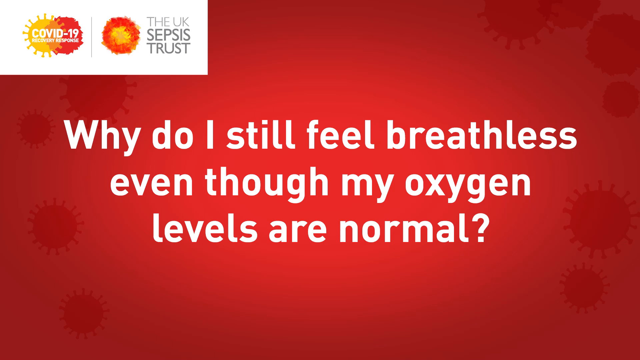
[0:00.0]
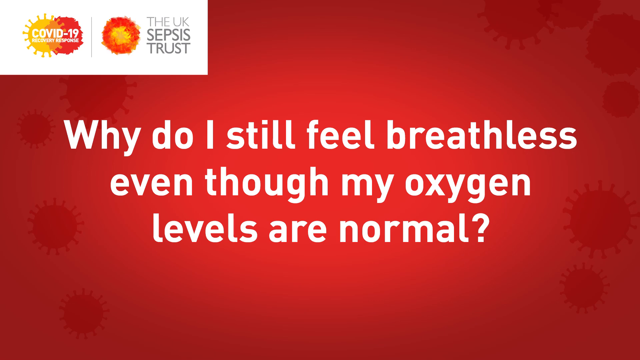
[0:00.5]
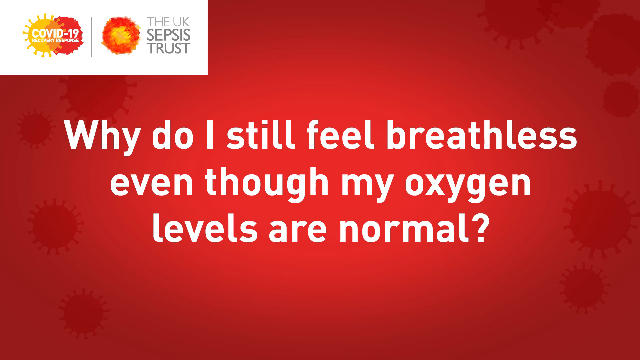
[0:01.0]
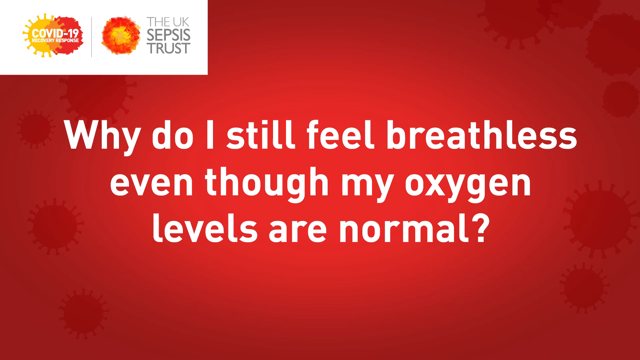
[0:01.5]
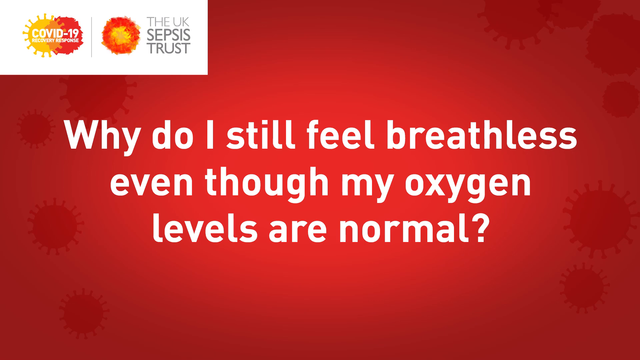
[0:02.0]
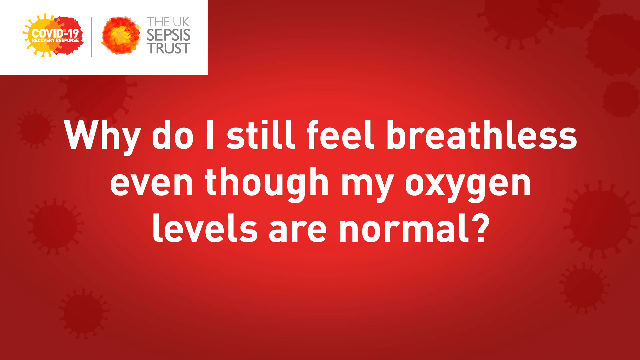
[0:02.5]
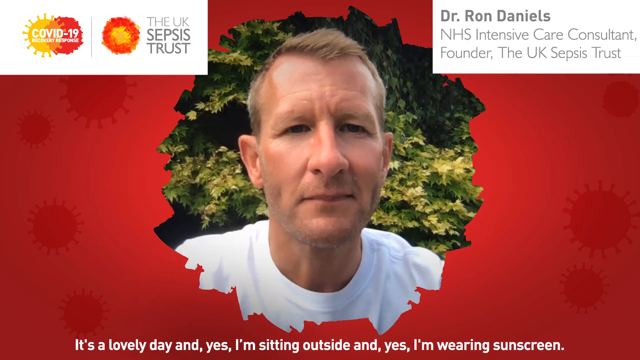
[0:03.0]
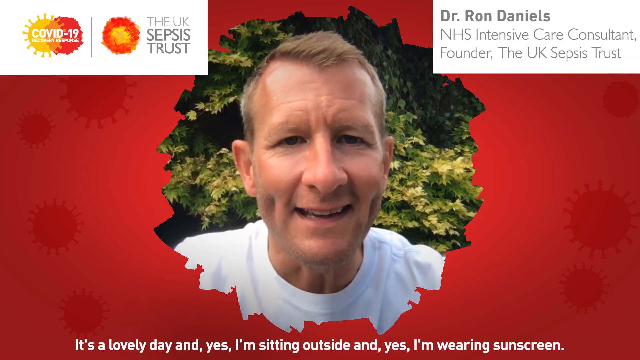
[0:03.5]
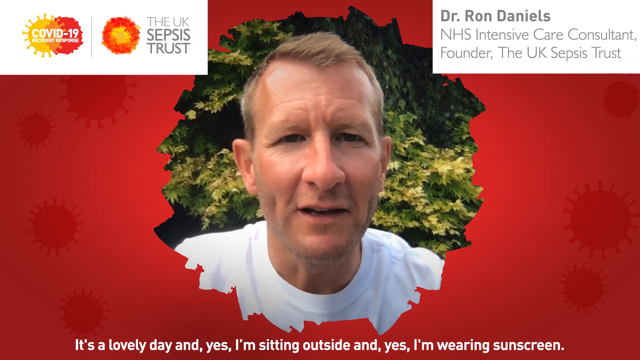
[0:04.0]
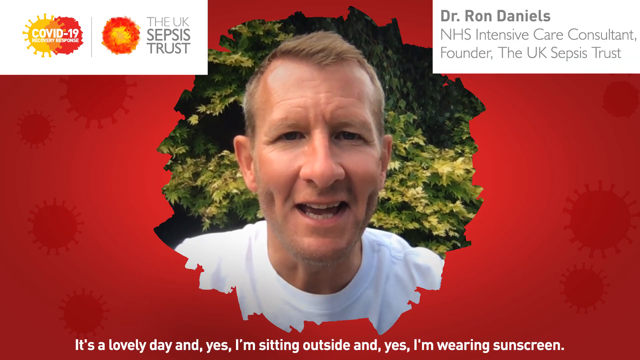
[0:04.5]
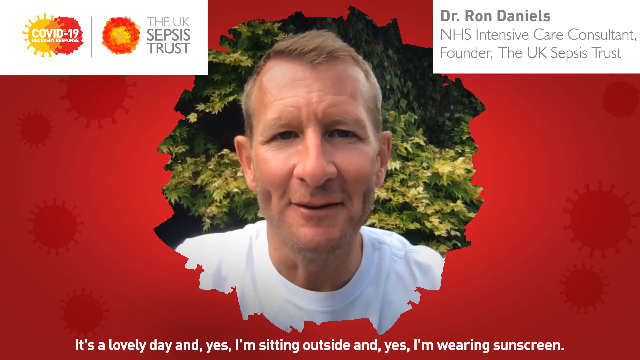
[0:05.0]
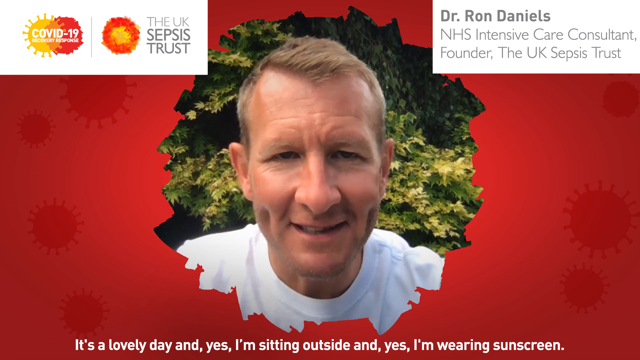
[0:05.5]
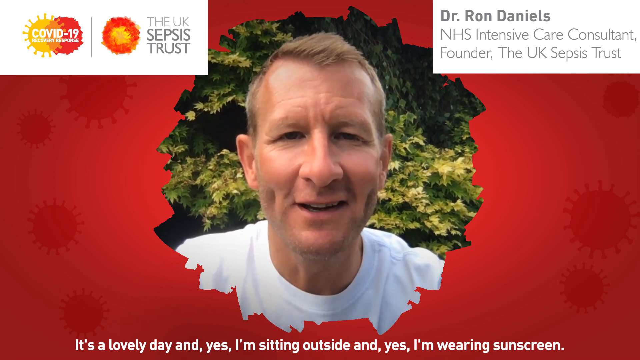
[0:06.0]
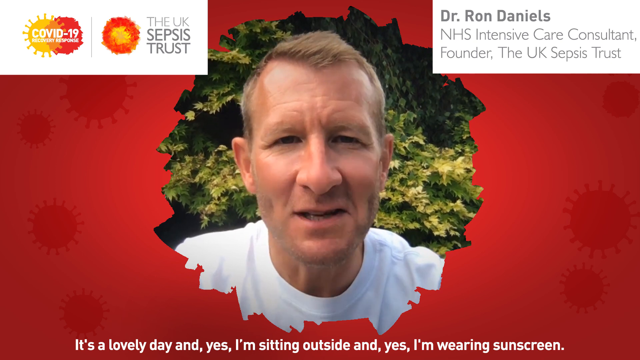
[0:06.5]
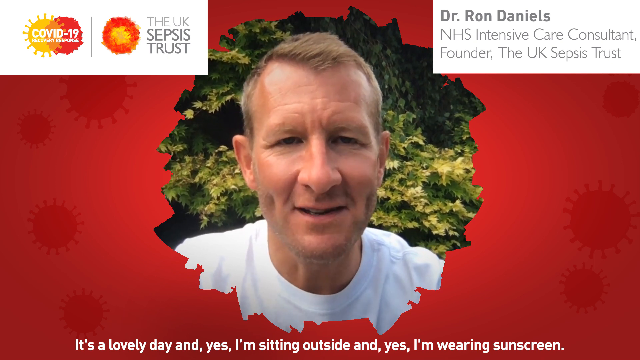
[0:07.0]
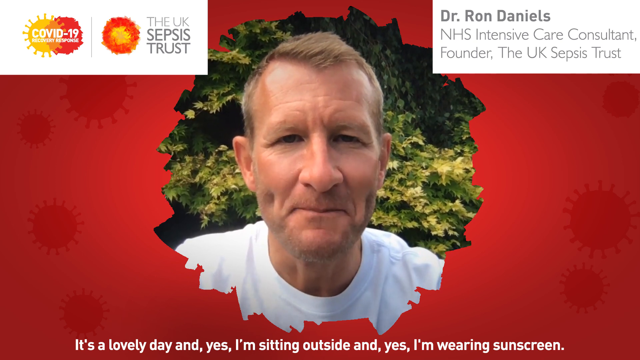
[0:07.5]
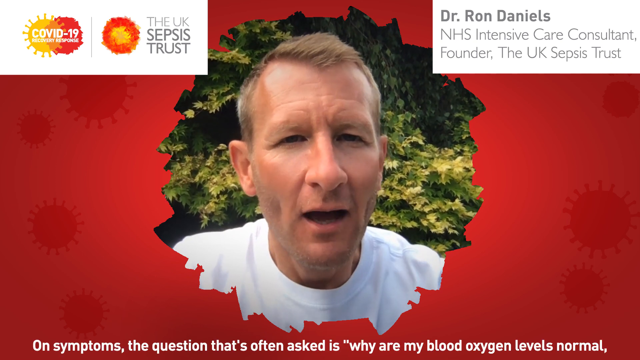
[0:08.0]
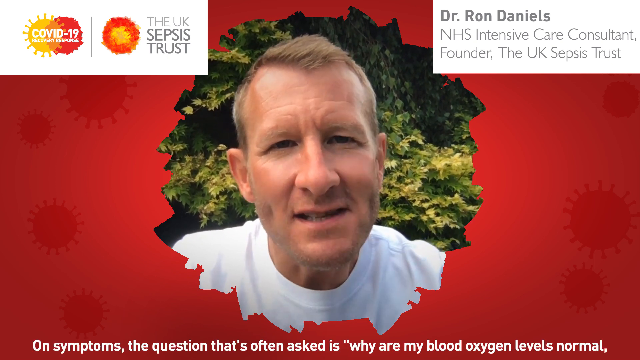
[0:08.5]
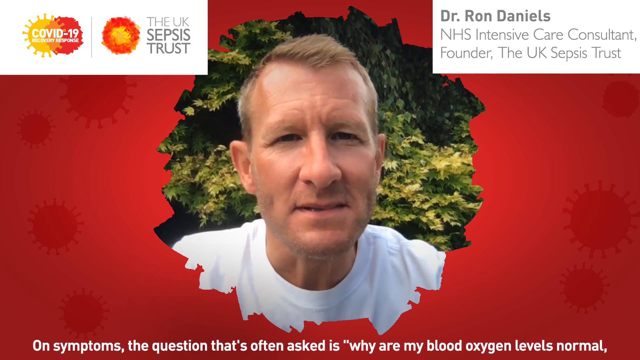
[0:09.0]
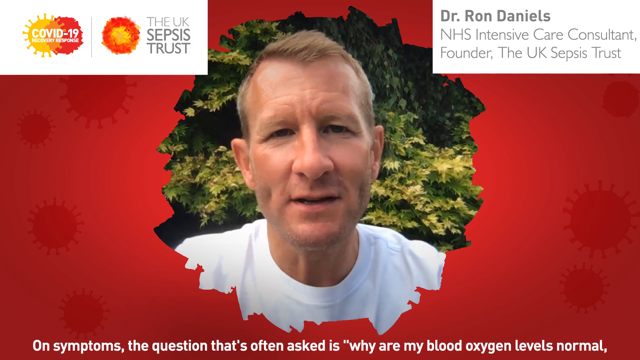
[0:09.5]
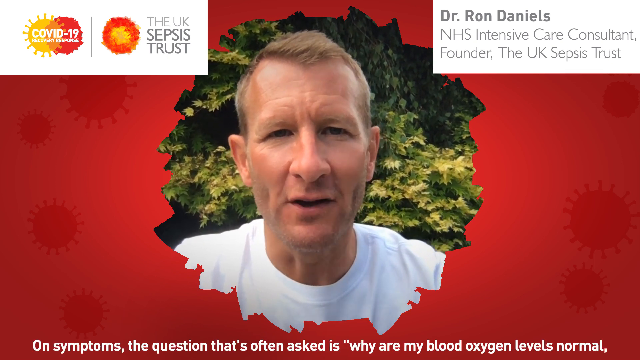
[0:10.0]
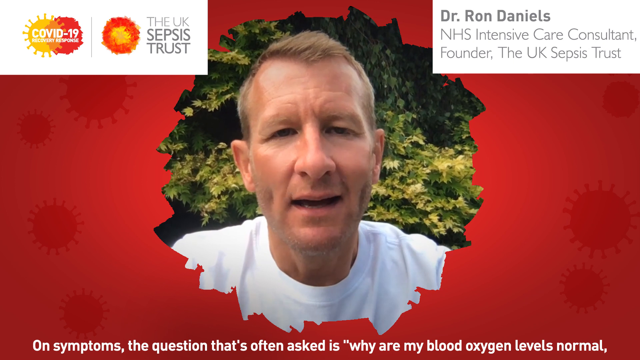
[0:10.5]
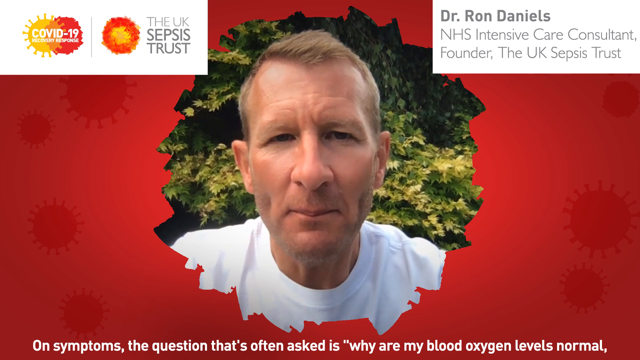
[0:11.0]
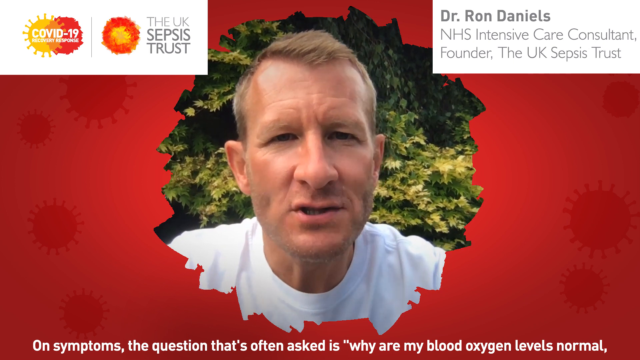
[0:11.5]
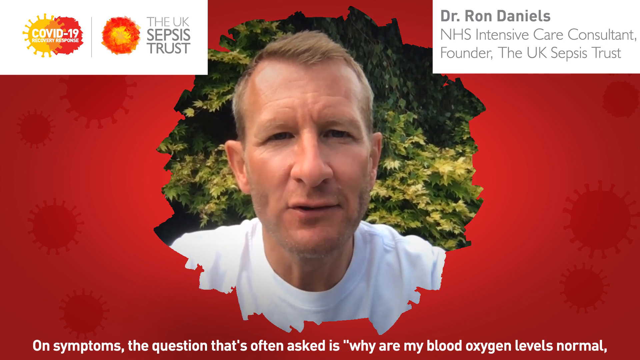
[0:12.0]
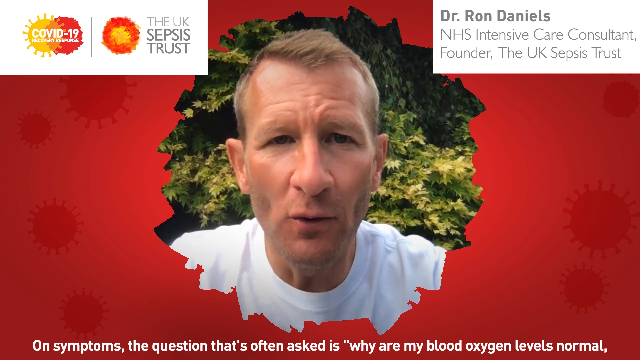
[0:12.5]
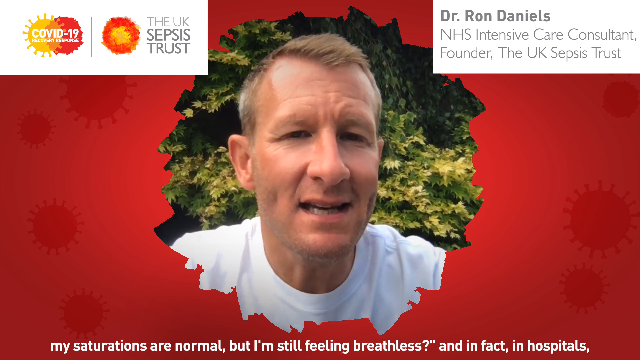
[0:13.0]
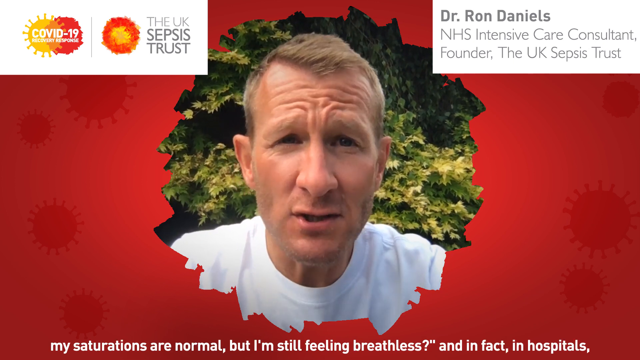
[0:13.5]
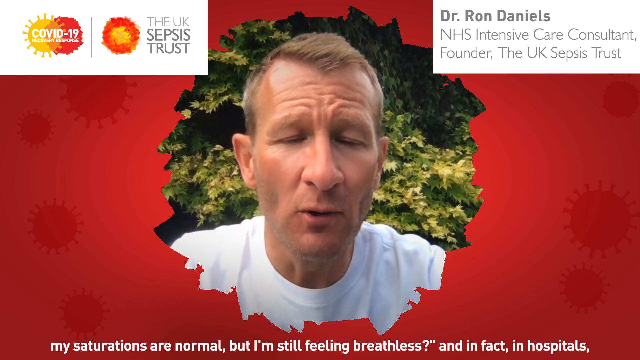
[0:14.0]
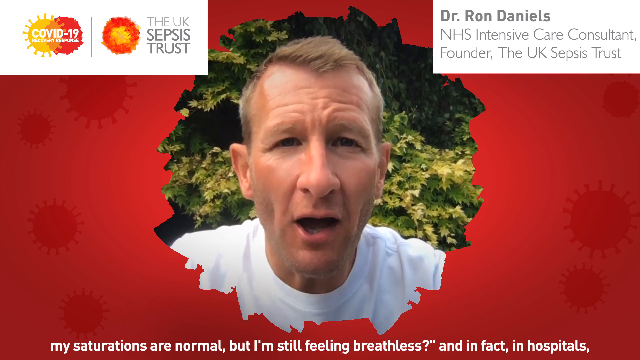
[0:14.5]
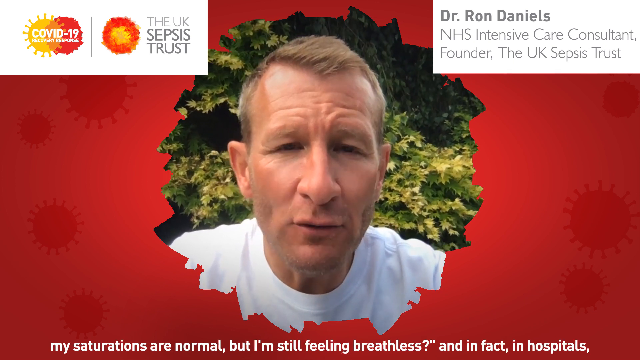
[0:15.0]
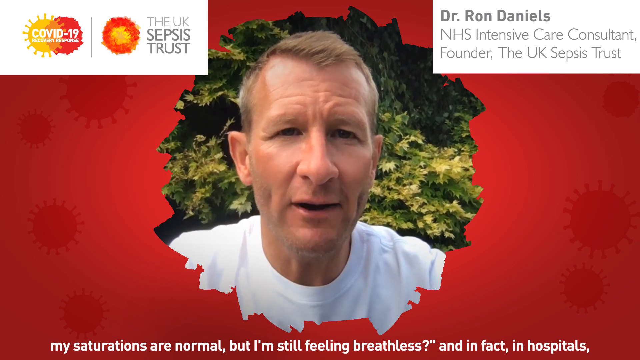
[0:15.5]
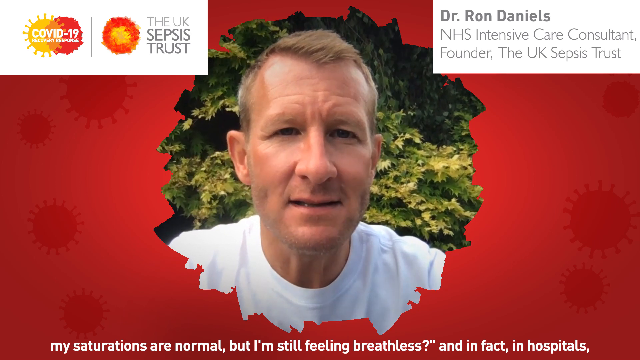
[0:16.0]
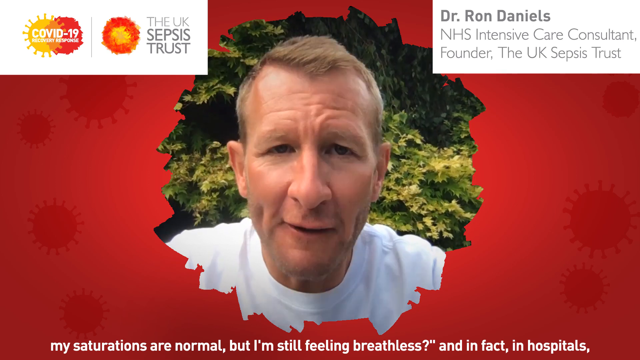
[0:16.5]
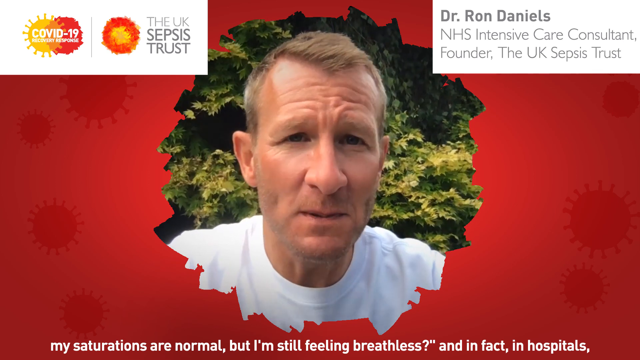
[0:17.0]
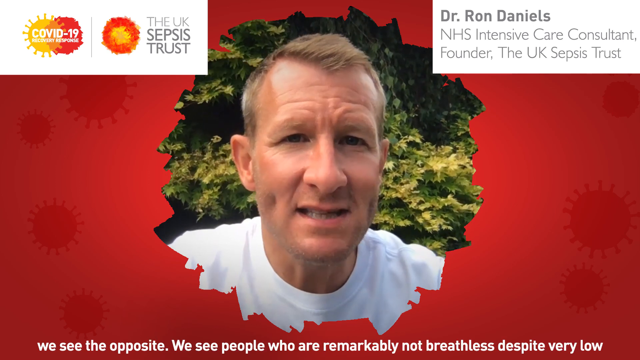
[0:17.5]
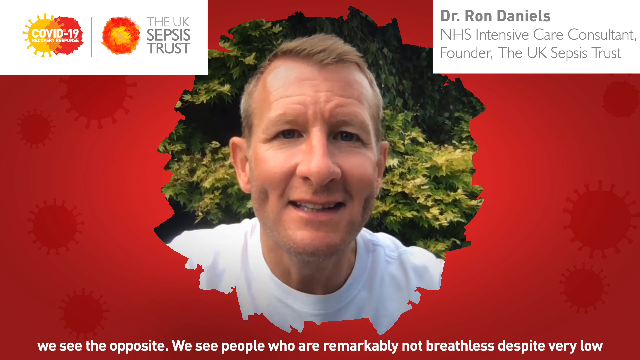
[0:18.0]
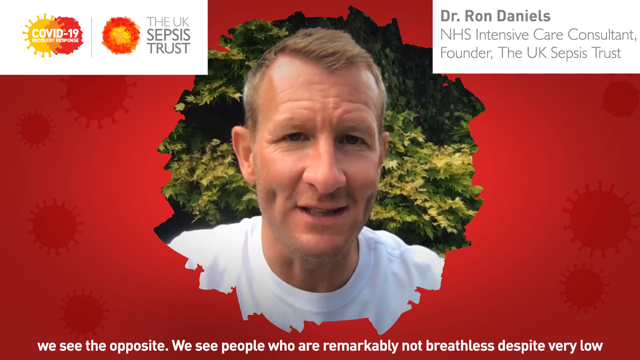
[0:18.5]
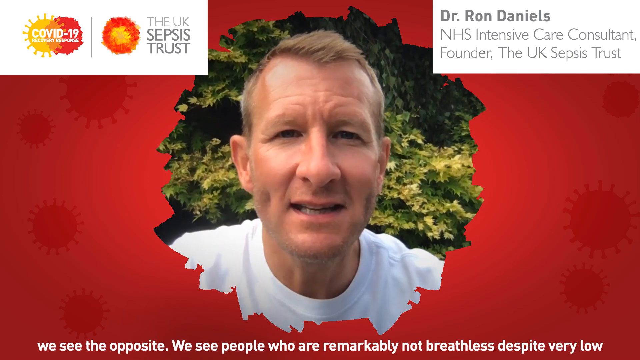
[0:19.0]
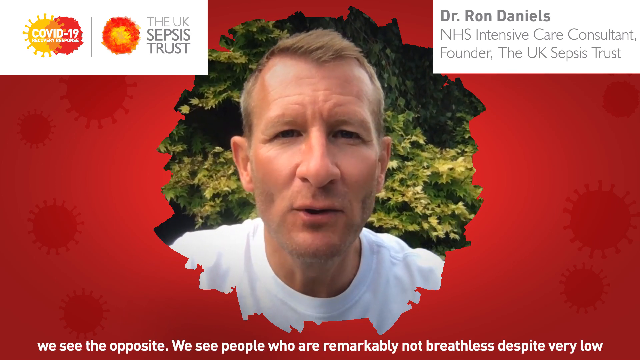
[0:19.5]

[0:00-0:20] The video opens with text on a red background reading "why do I still feel breathless even though my oxygen levels are normal." In the top left there is a sort of COVID-19 recovery response logo above it, and to the right of that it says "the UK sepsis trust." A man then appears in sort of a starburst shape cut through the red, with a green tree in the background behind his head. He has short brown hair and wears a white shirt. To the right of and above him it says "Dr. Ron Daniels, NHS Intensive Care Consultant, founder of the UK Sepsis Trust." He is speaking, moving his head around quite a bit, while the trees wave behind him. Not much else happens besides his talking. White text at the bottom says "We see the opposite," and the text below him also says "it's a lovely day."